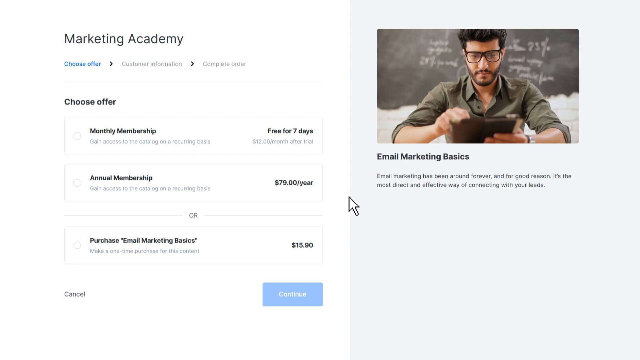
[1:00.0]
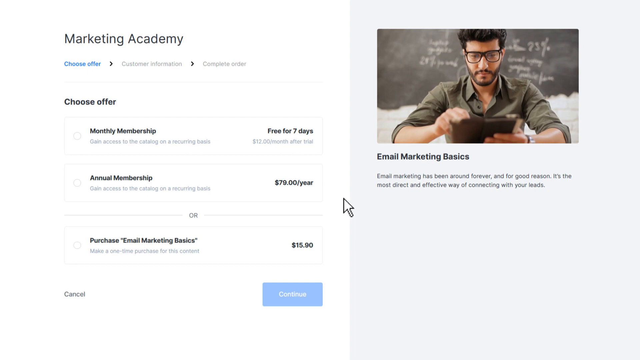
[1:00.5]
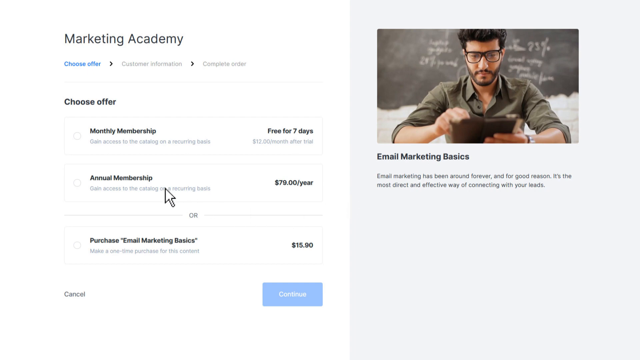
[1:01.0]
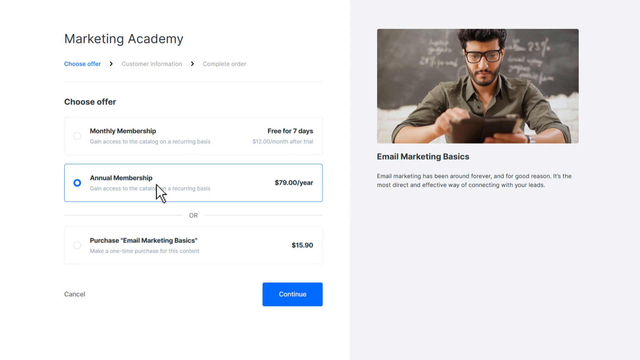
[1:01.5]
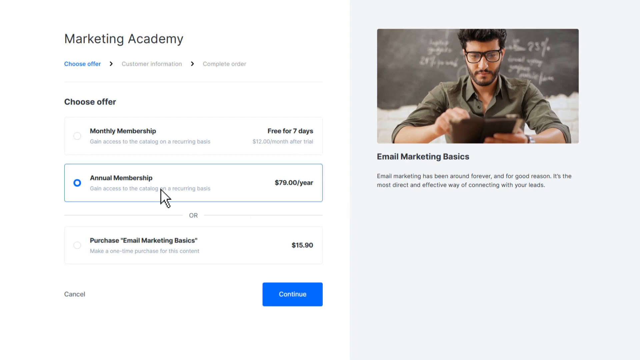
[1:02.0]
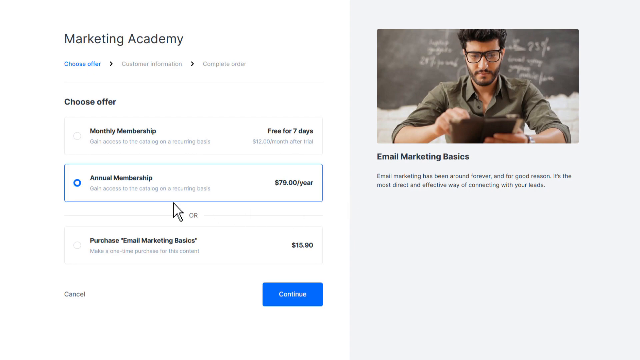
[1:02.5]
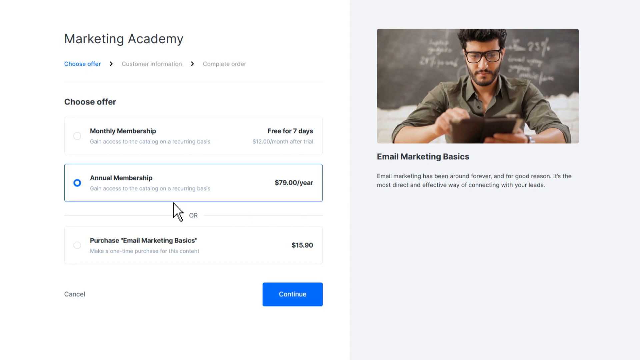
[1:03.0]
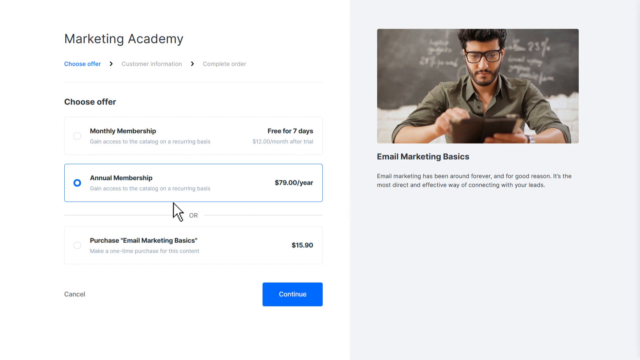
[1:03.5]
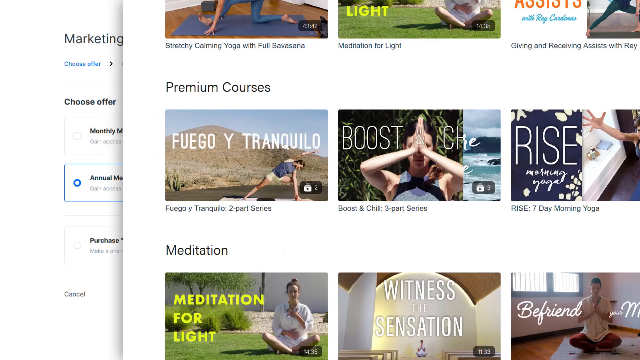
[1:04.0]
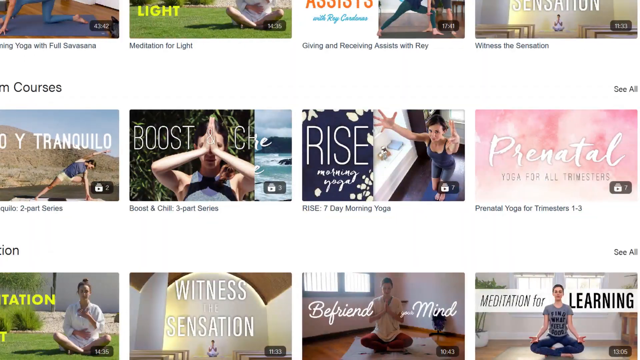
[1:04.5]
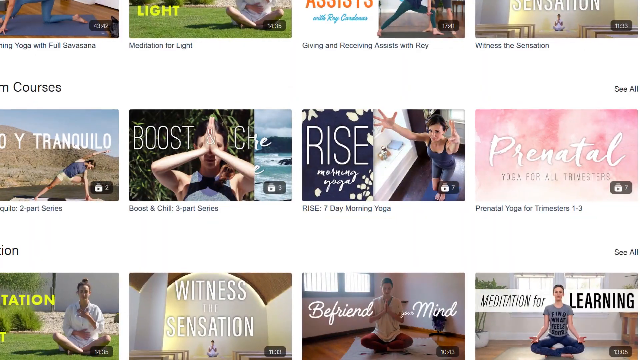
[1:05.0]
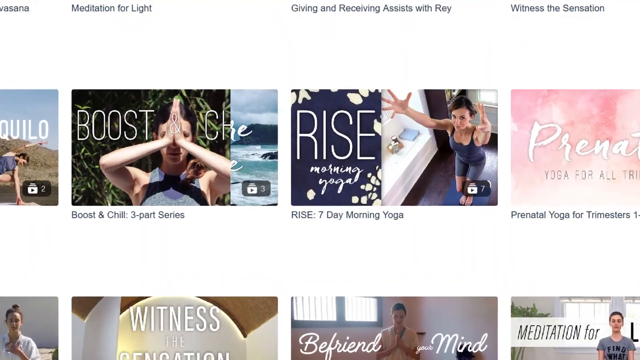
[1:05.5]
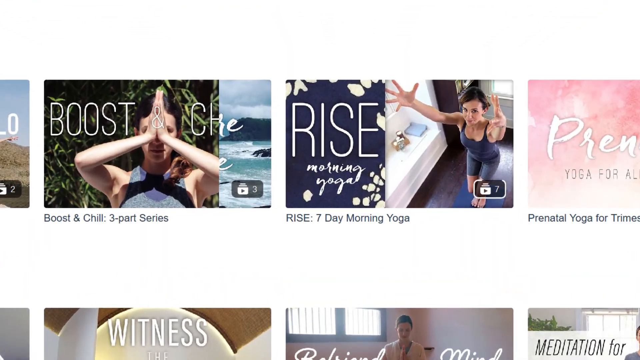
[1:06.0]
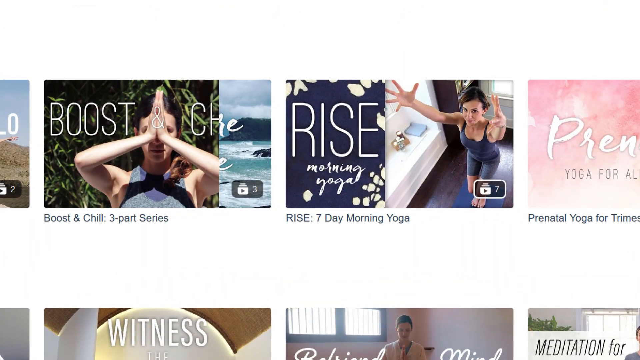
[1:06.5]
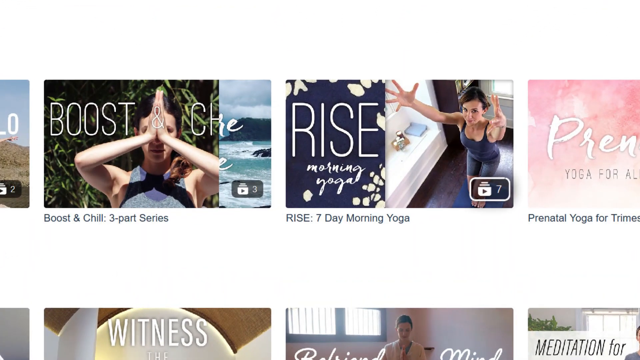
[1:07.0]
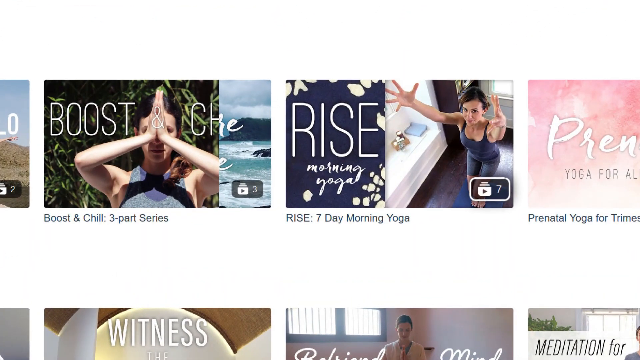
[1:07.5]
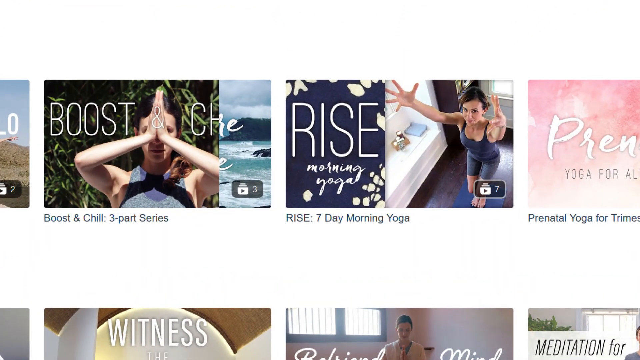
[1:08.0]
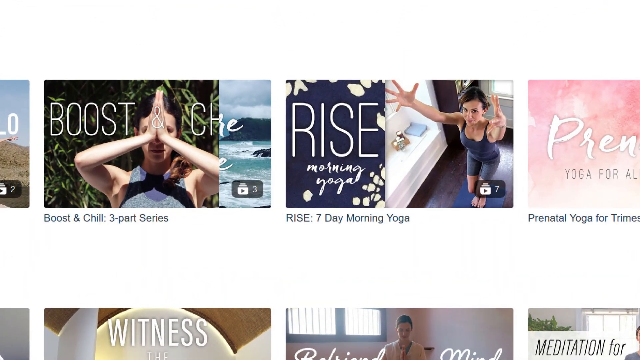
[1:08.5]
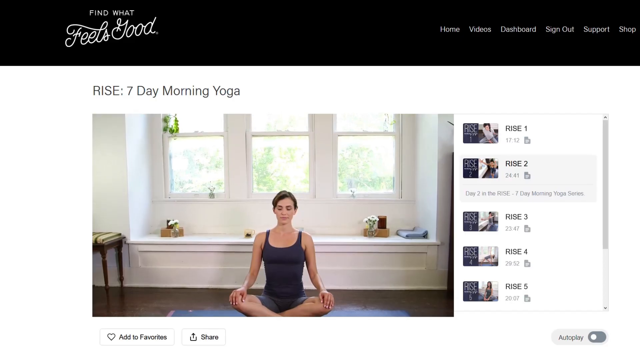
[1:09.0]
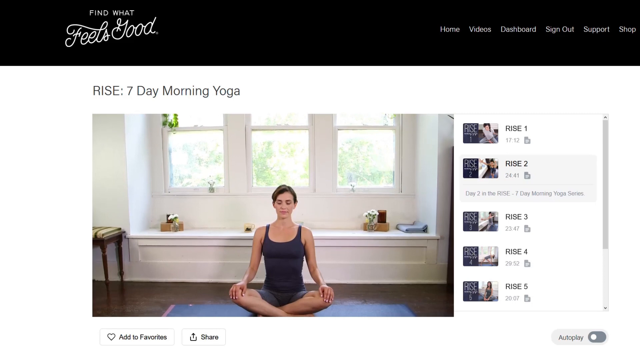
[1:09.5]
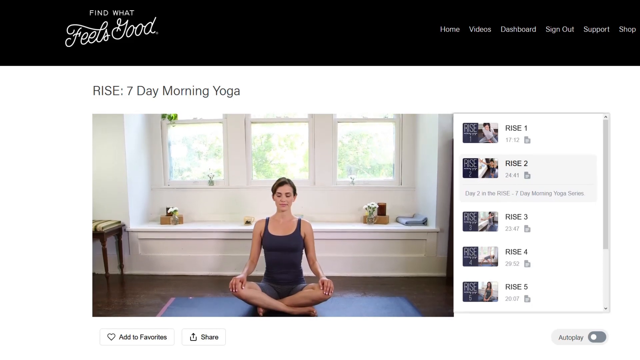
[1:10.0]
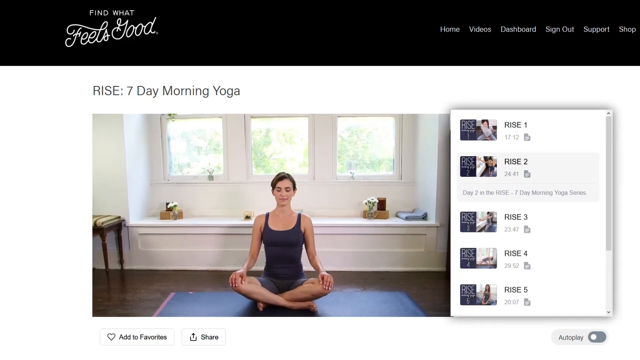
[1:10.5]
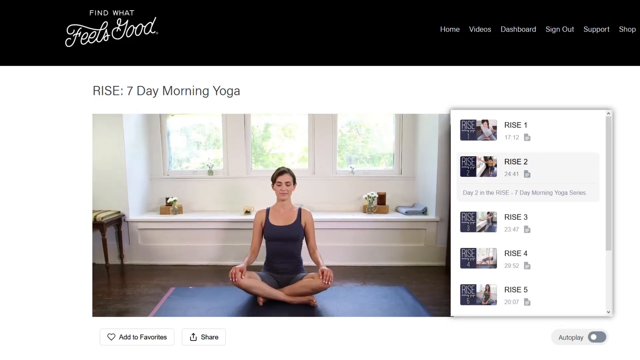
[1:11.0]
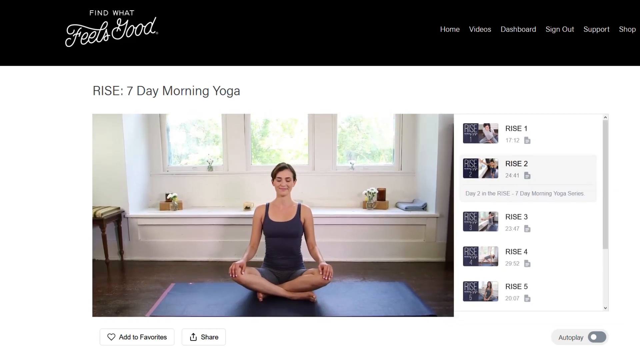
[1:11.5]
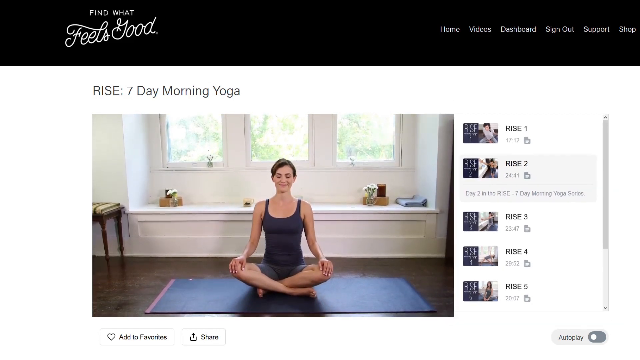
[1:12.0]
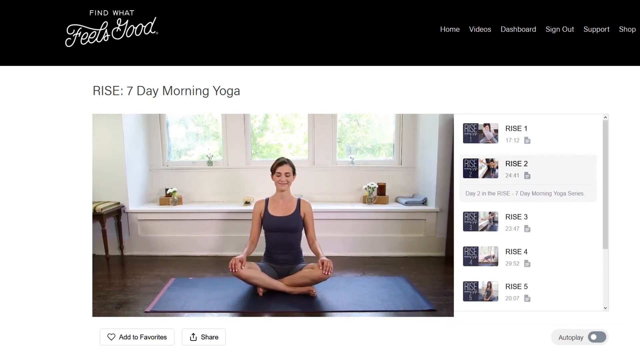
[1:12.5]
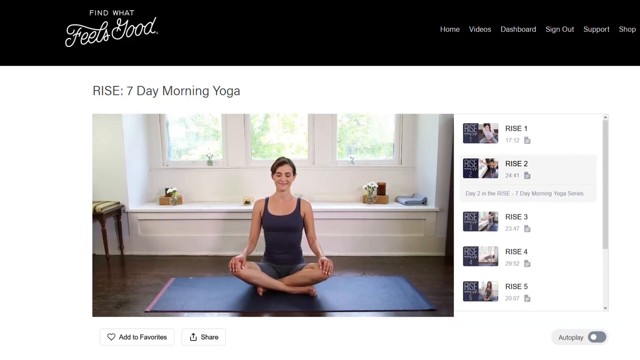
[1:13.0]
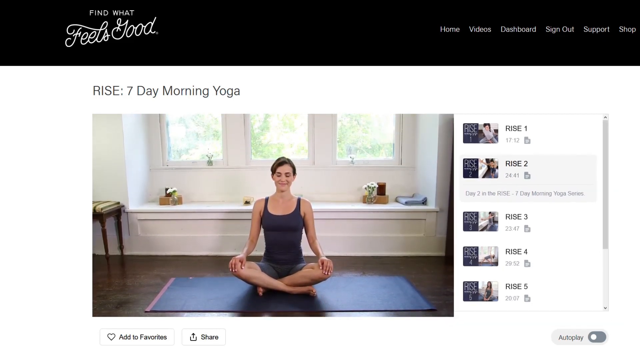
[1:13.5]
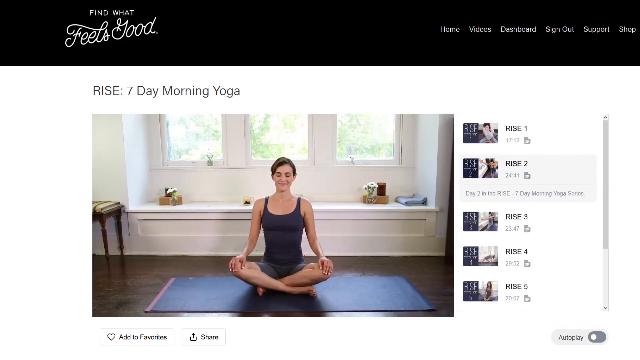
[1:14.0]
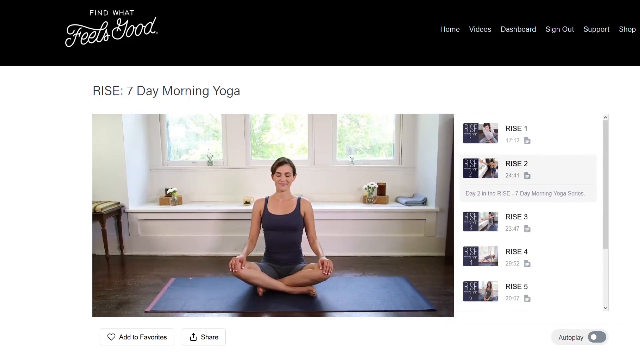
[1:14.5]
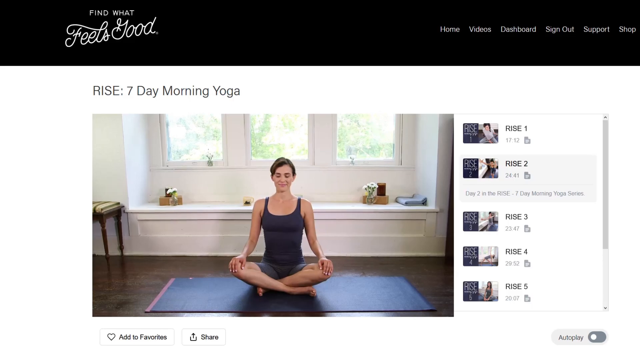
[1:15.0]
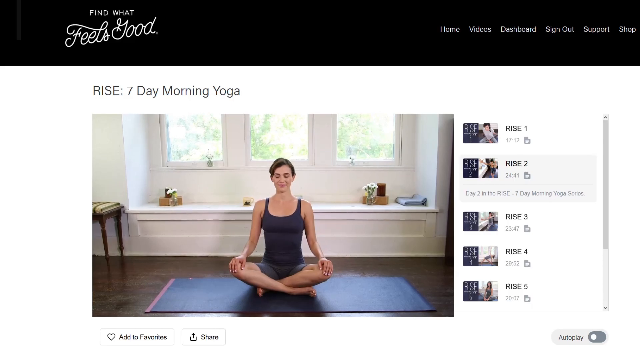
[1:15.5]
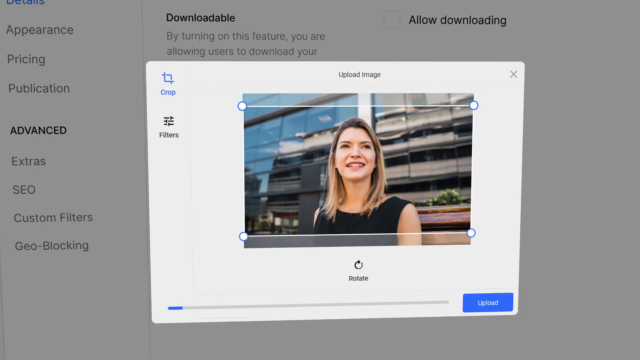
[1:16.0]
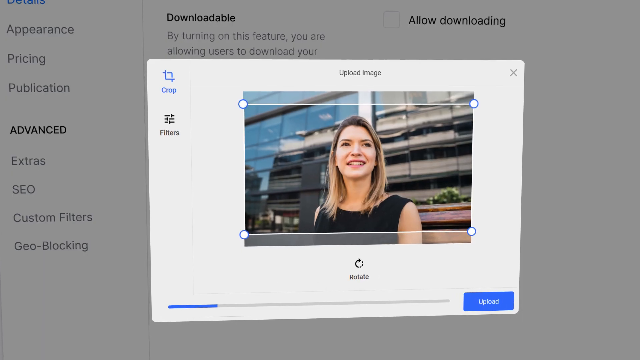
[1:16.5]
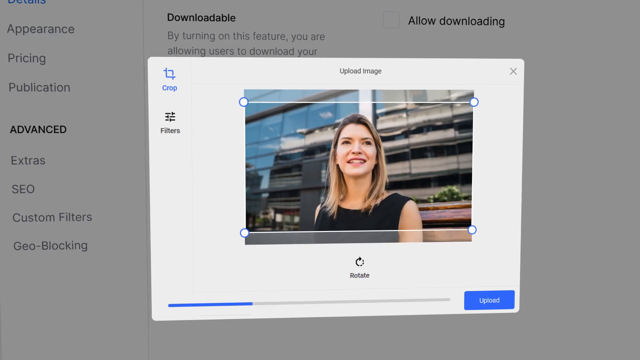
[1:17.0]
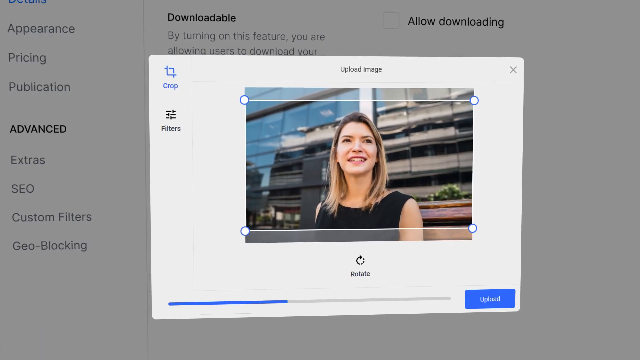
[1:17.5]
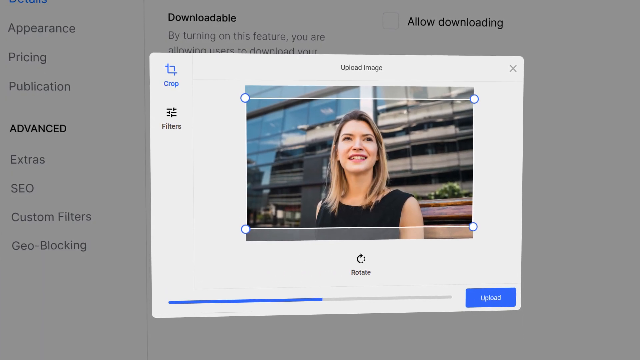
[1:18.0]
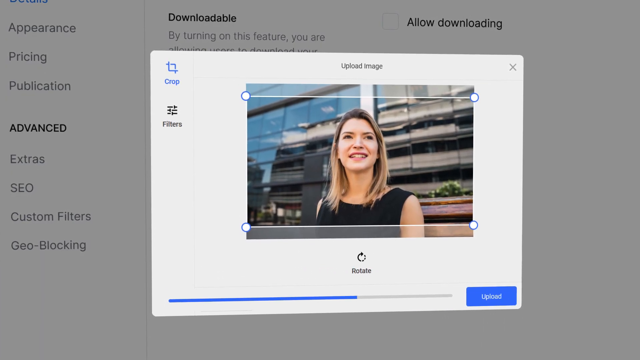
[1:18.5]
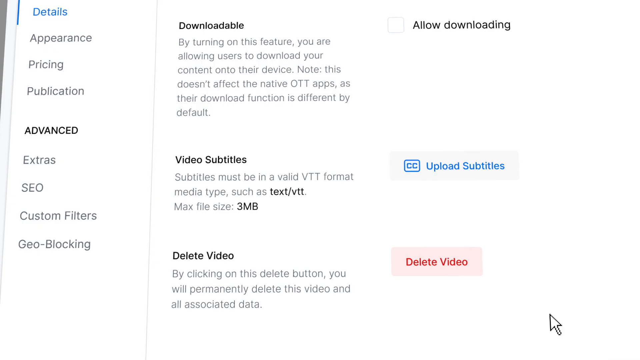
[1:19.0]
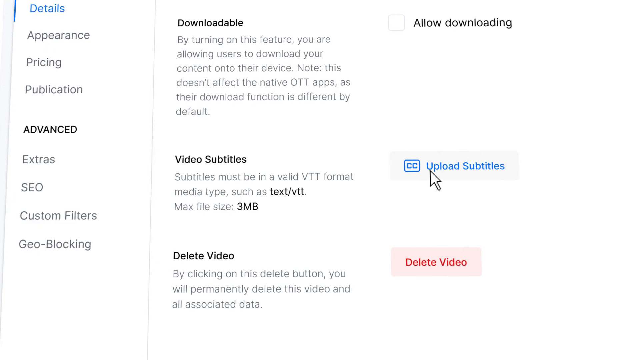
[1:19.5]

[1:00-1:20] A live cursor chooses information about business and clicks on a video titled "rise seven day morning yoga," which shows a person sitting in a yoga position with their hands on their knees. A pop-up appears saying "upload image," with options to crop, filter and rotate, and an upload button pops up in the middle. There is also an option to upload subtitles. The page is called the "Marketing Academy" and says "choose an offer," with "monthly membership," "annual membership," and a purchase of "email marketing basics." A man looking at a computer is shown with "email marketing basics" under him. The annual membership for $79 is chosen, and the yoga video becomes viewable. The series, called Rise, begins at the #1 video, and the viewer is on rise seven. A woman is shown in a yoga pose.